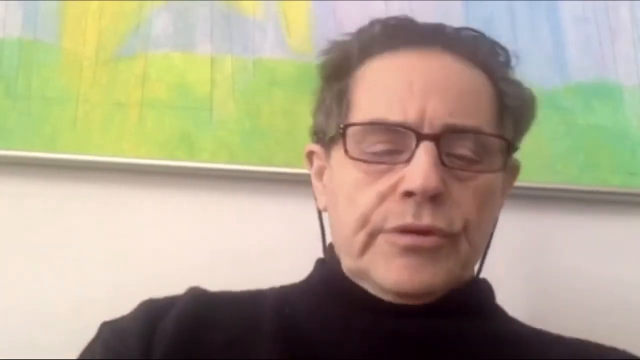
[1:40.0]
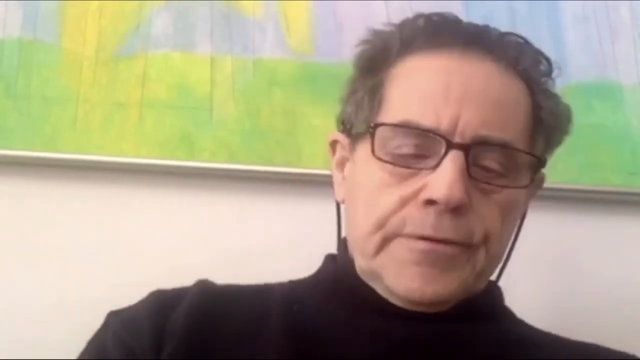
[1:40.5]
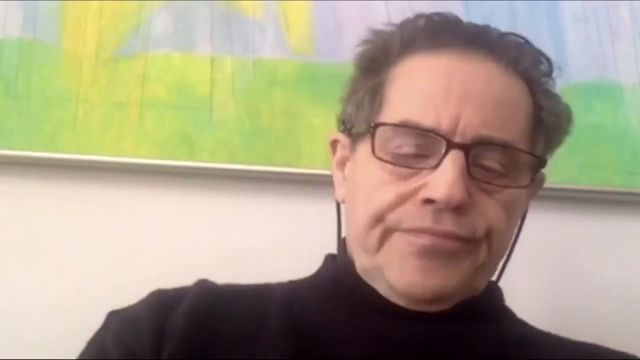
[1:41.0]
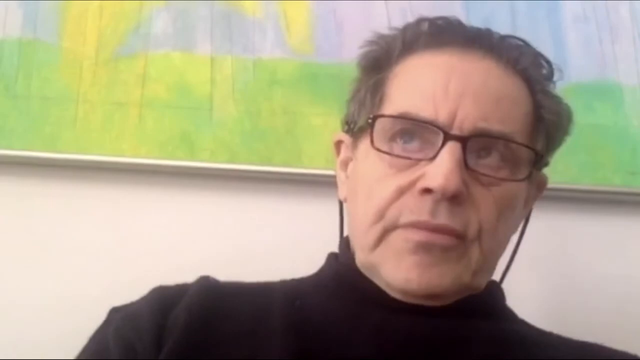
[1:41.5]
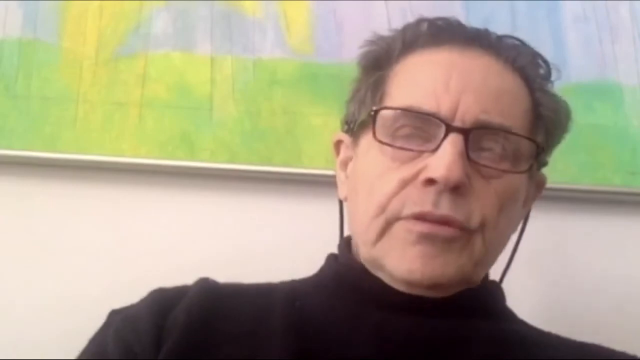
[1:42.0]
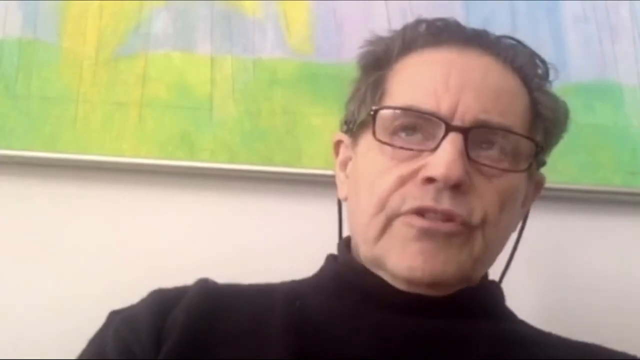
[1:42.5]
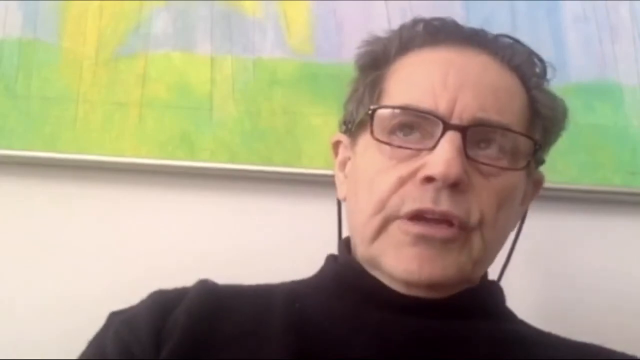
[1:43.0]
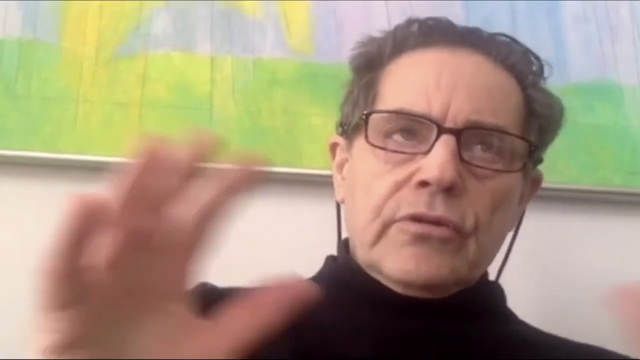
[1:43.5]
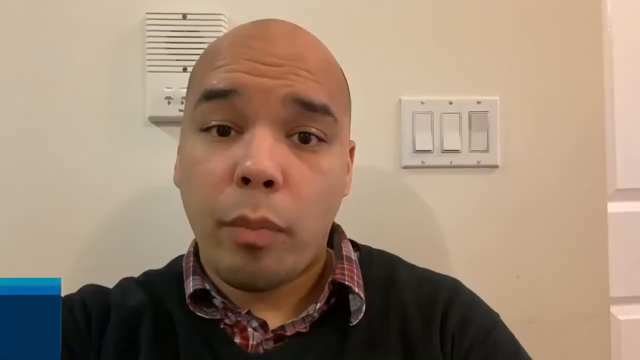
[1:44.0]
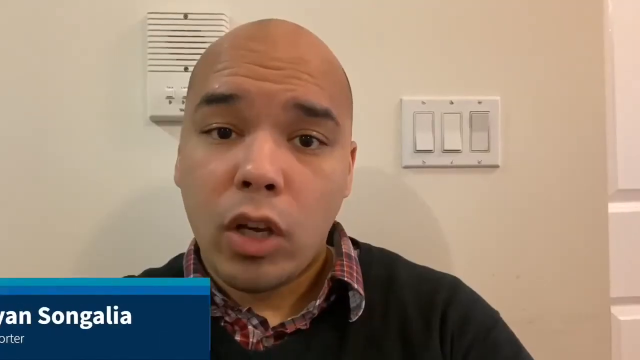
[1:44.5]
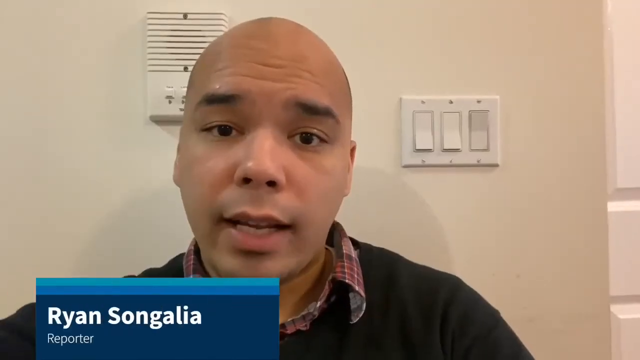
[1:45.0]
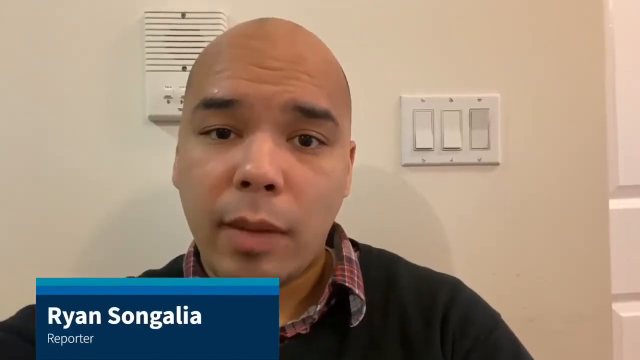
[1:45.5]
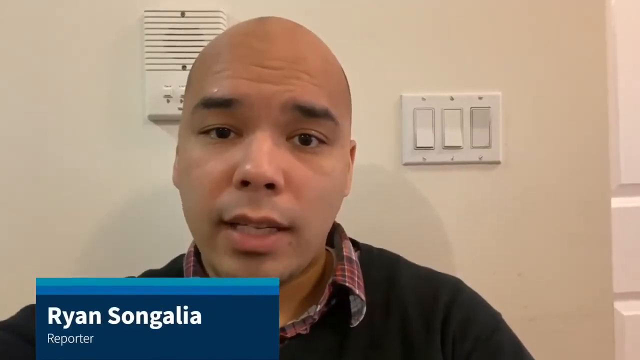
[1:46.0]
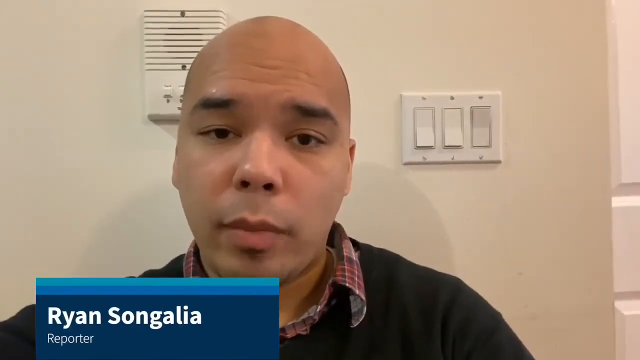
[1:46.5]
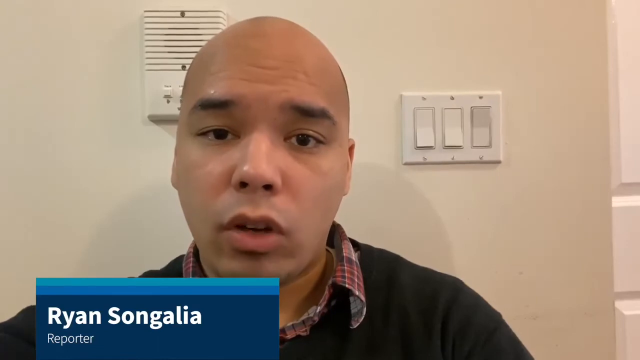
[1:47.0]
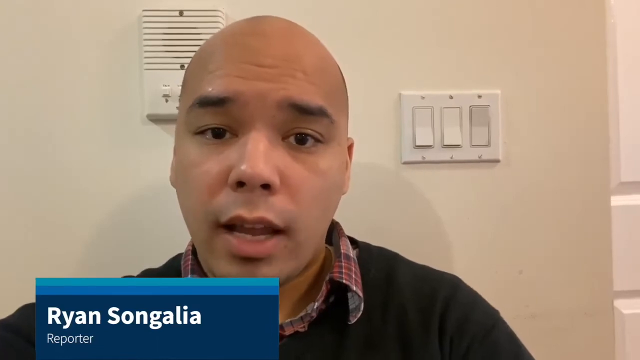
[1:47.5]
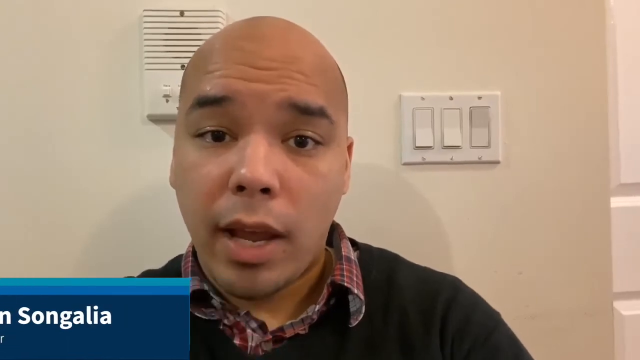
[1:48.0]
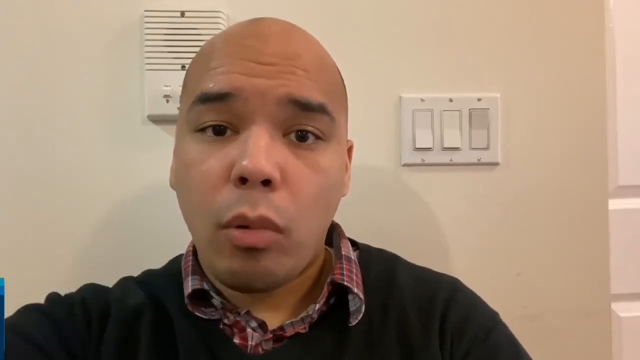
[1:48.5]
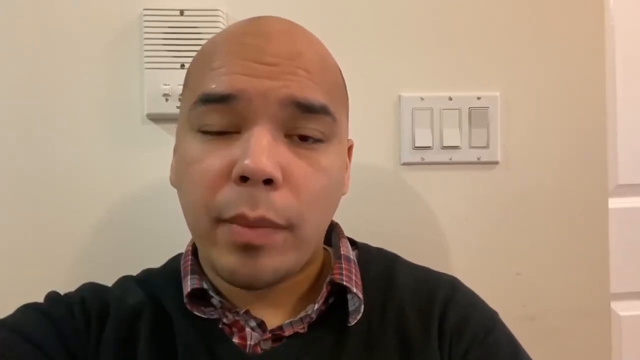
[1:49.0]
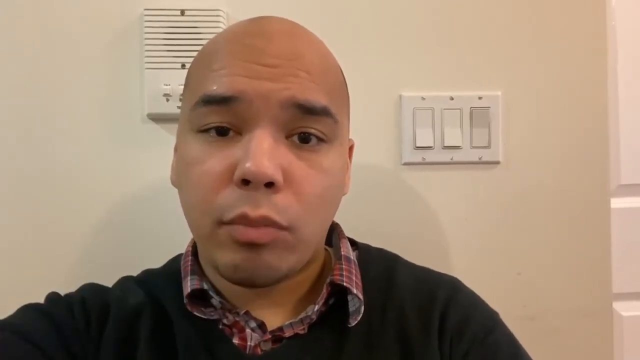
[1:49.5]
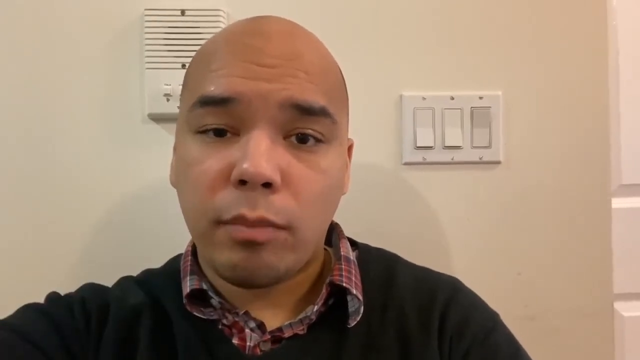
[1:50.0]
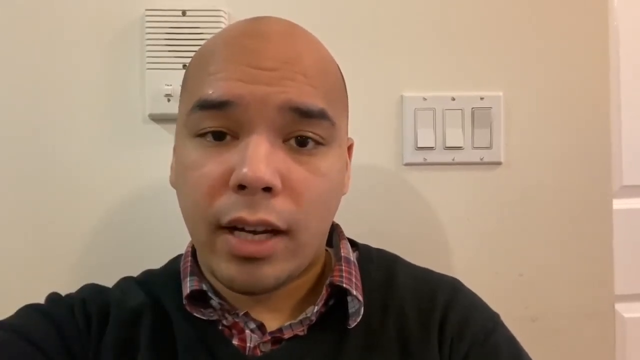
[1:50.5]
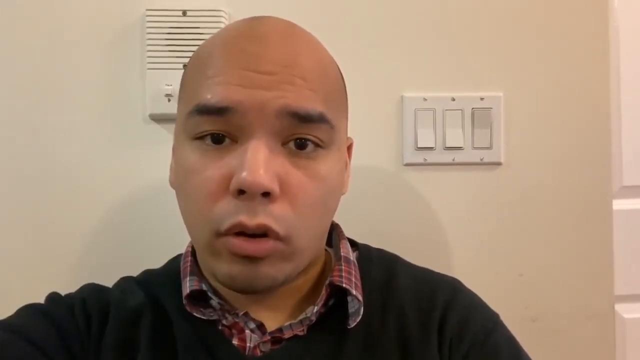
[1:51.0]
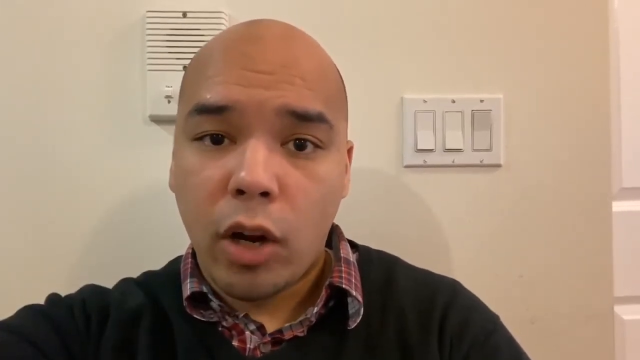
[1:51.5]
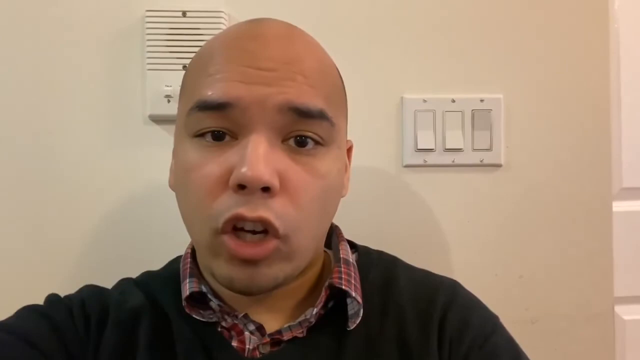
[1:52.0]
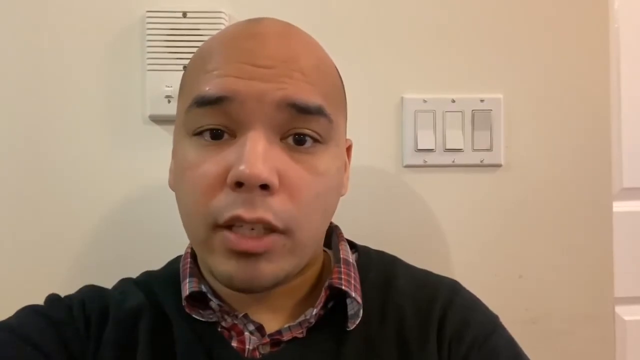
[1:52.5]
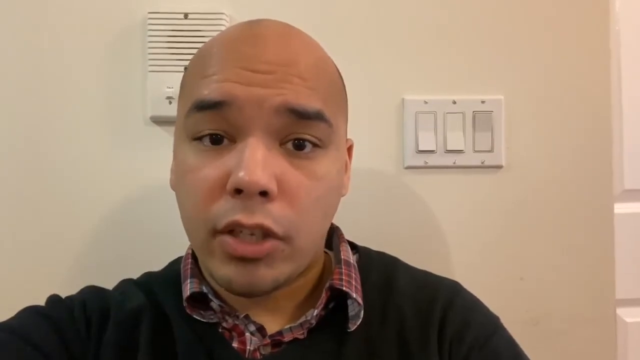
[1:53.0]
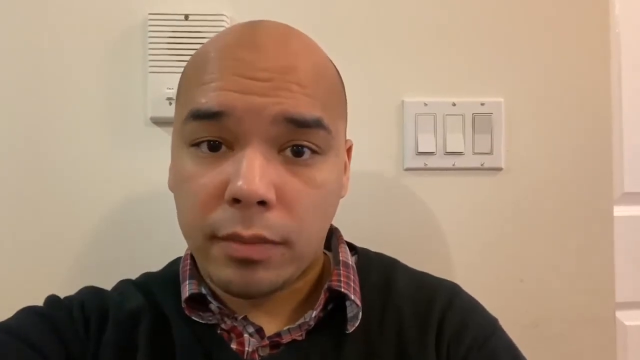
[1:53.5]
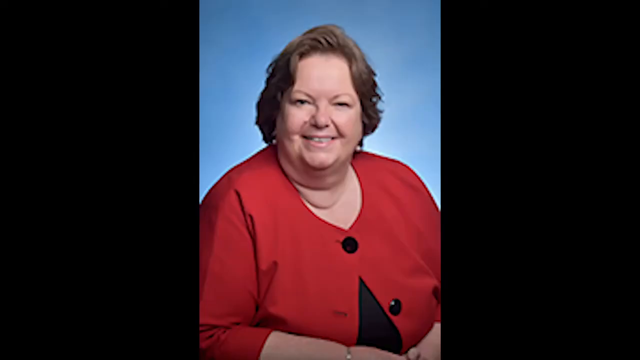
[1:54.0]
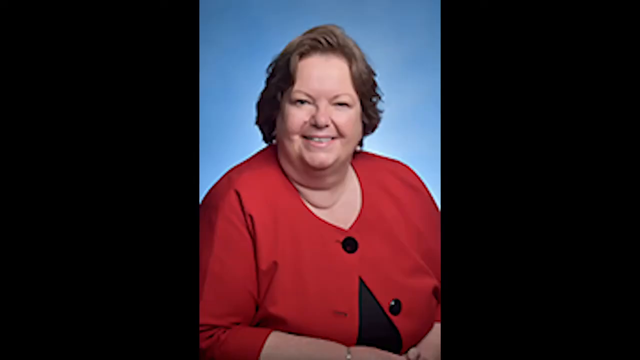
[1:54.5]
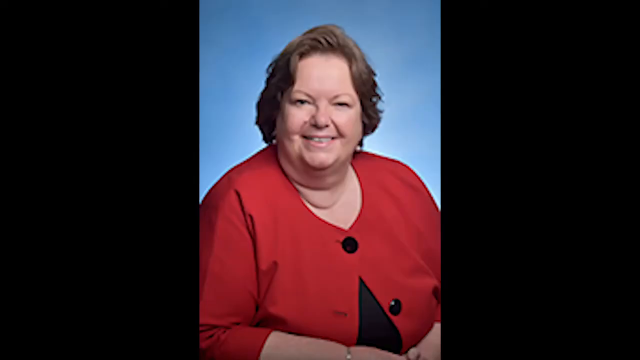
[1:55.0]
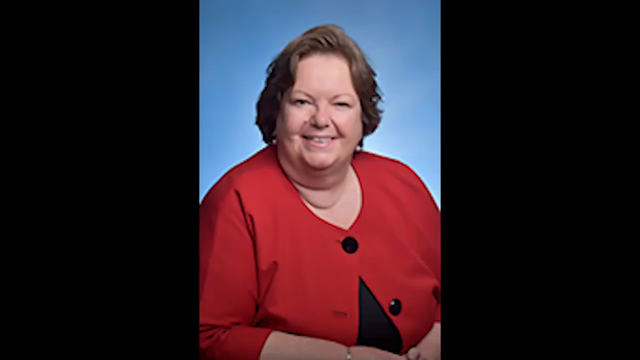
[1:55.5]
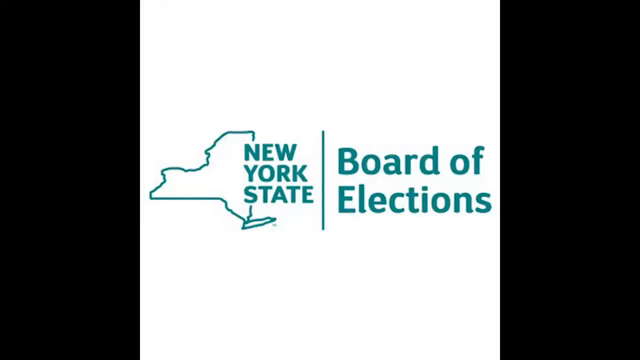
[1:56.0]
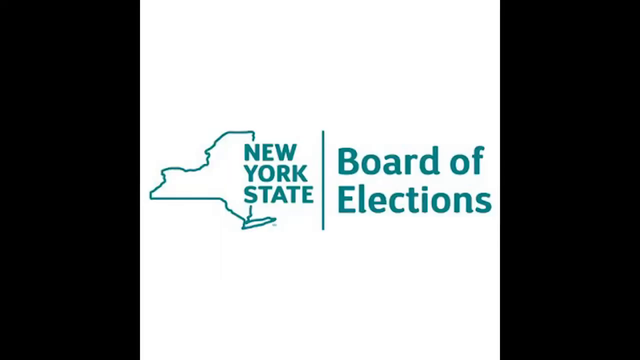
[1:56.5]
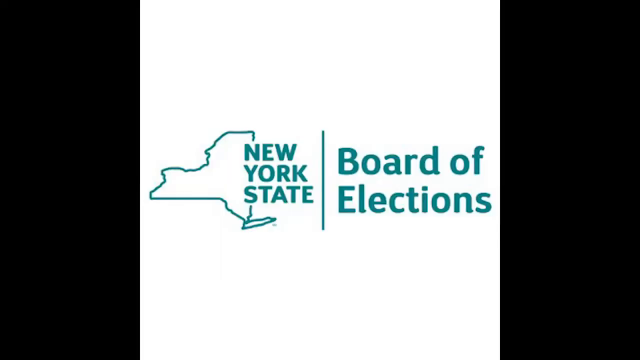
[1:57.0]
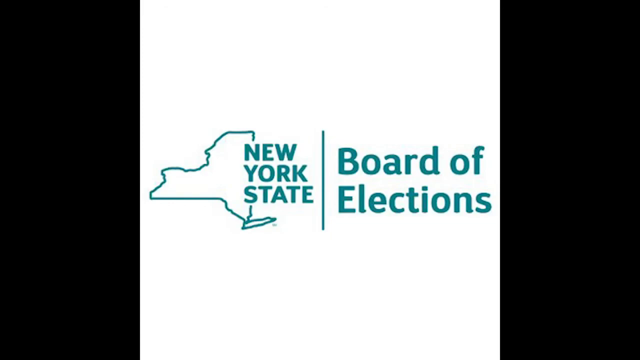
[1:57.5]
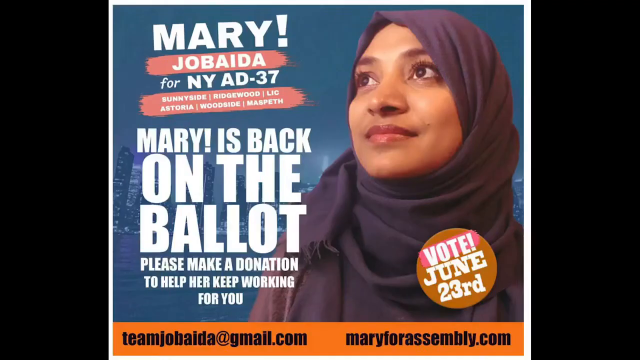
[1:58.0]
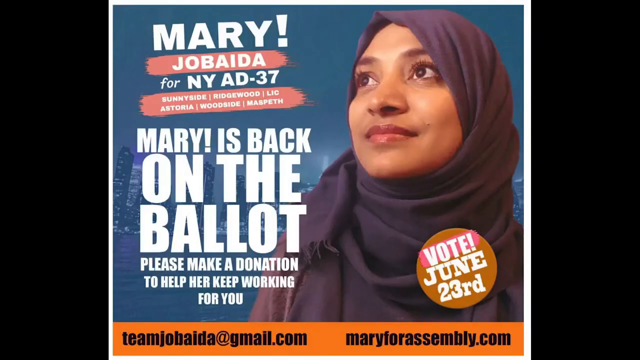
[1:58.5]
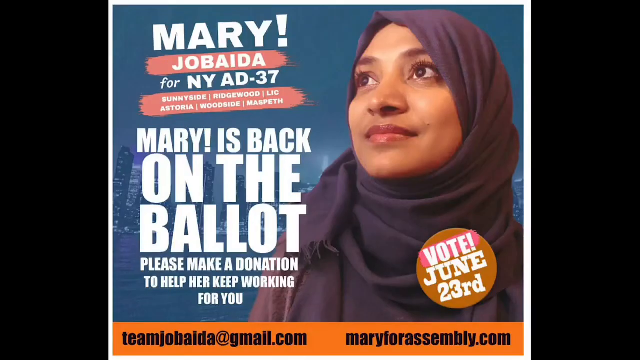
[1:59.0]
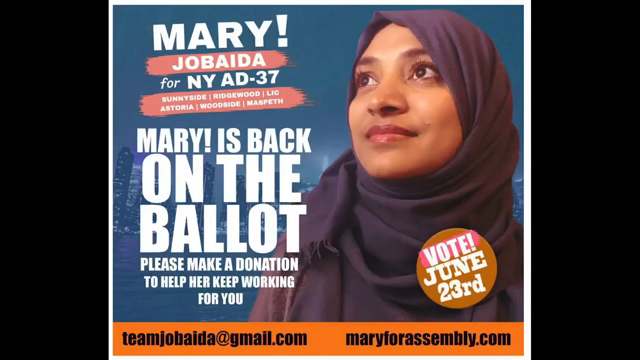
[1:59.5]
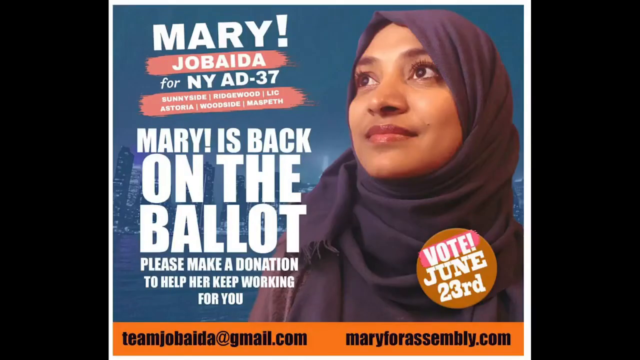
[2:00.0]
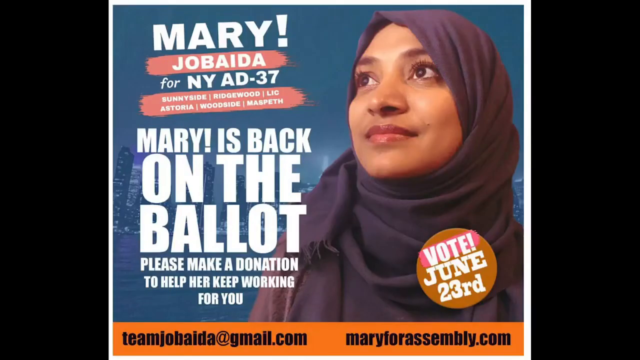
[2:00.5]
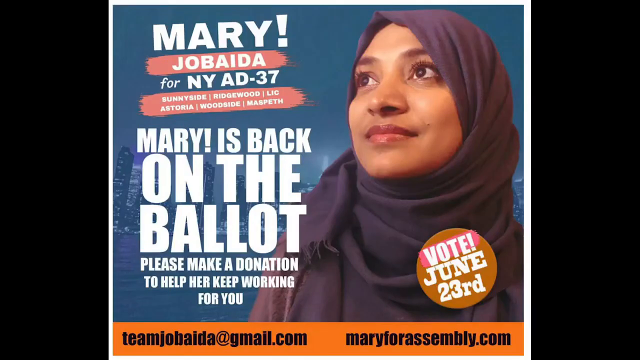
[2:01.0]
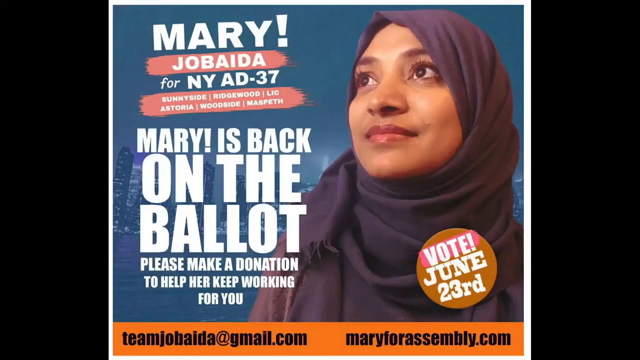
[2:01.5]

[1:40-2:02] Momita Ahmed of New York is shown, along with many other participants giving their perspectives. A reporter, Roy, gives his view of the situation, and a political researcher gives her perspective, followed by other reporters or professionals. Afterwards, a poster appears for Mary Jo Bida for New York, reading "Mary is back on the ballot. Please make a donation to help her keep working for you." Court rulings supporting her point of view are also shown.